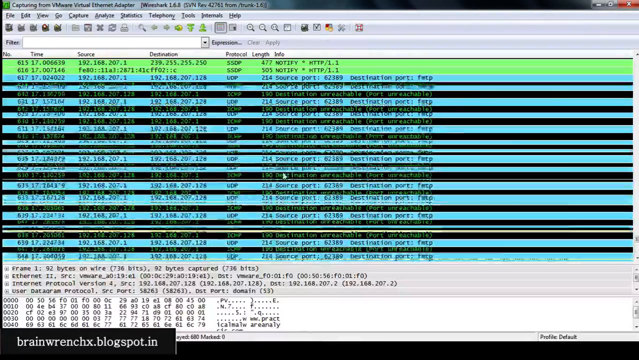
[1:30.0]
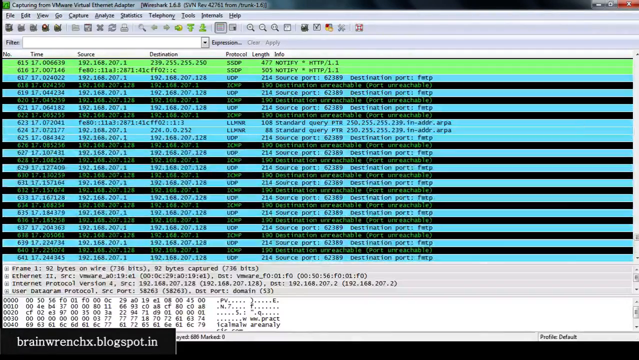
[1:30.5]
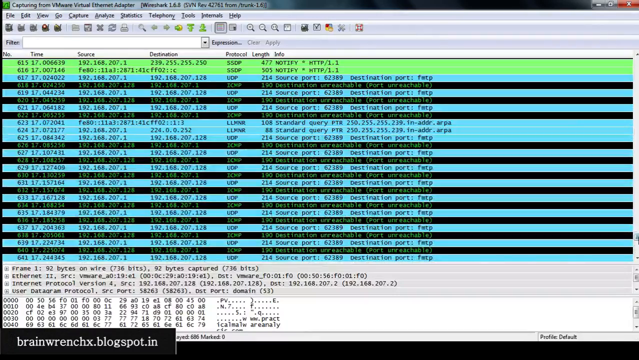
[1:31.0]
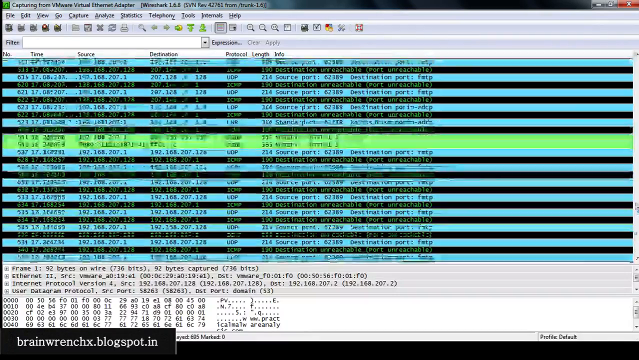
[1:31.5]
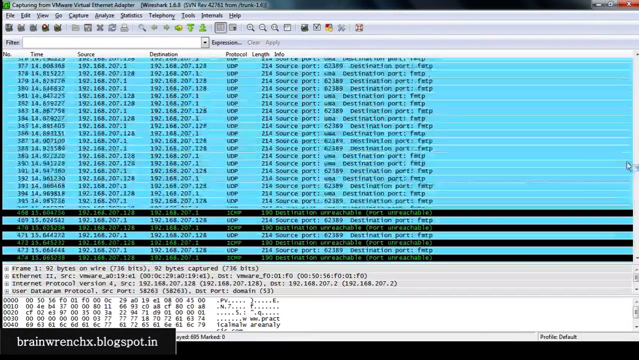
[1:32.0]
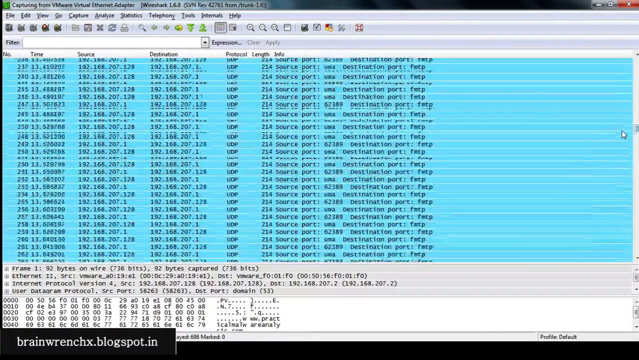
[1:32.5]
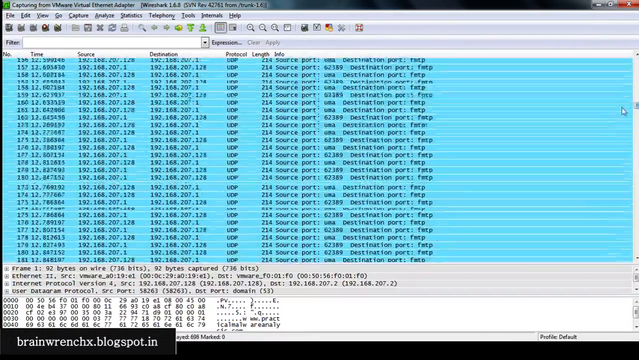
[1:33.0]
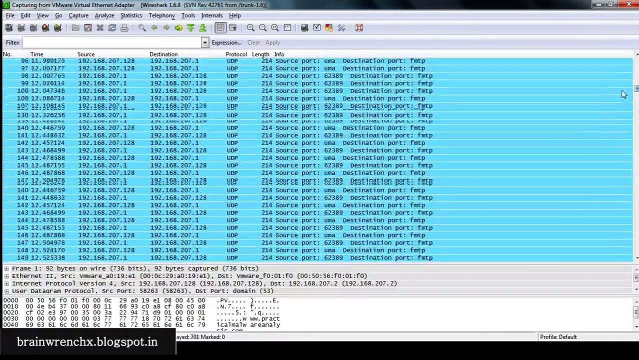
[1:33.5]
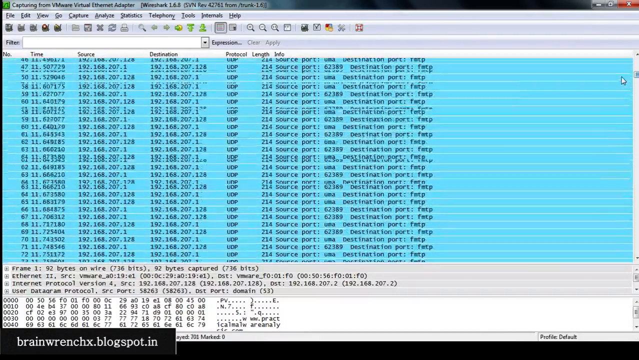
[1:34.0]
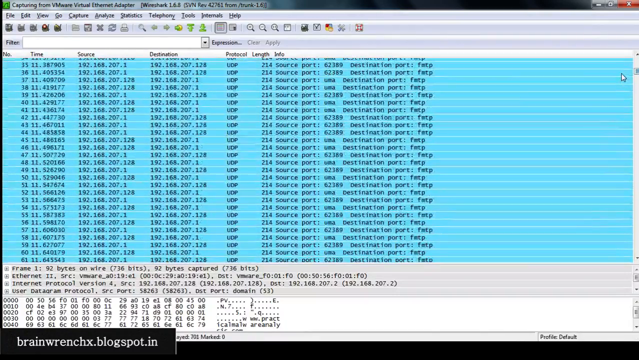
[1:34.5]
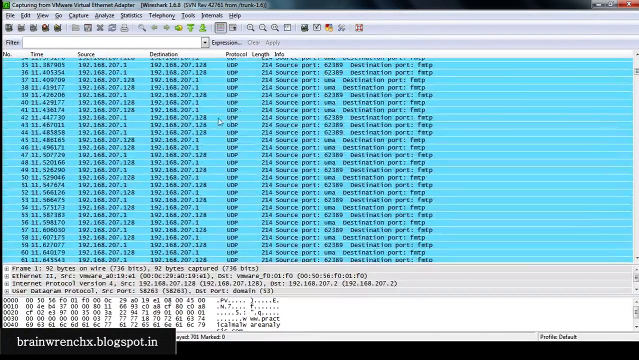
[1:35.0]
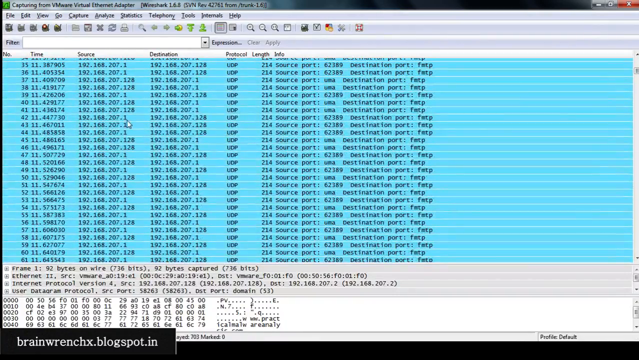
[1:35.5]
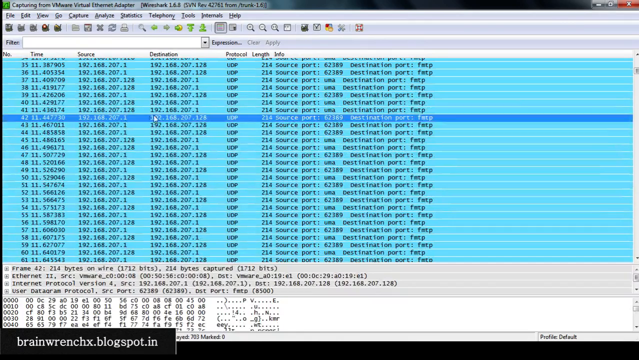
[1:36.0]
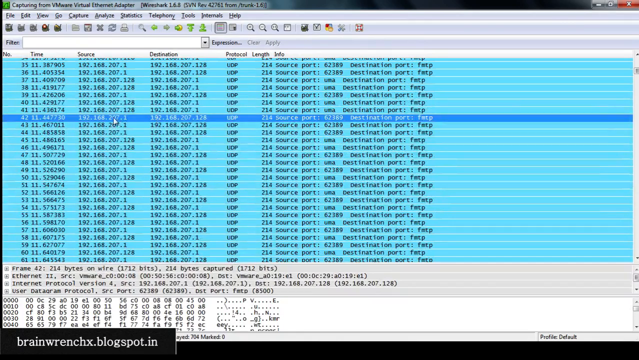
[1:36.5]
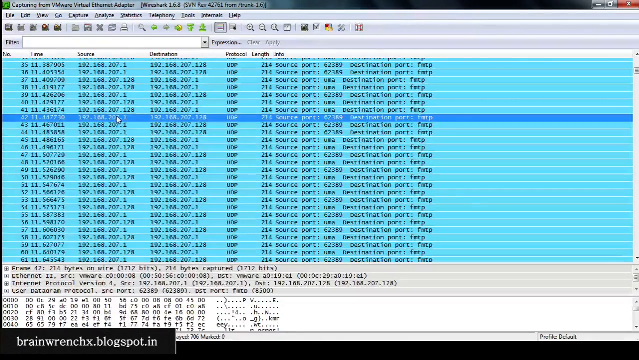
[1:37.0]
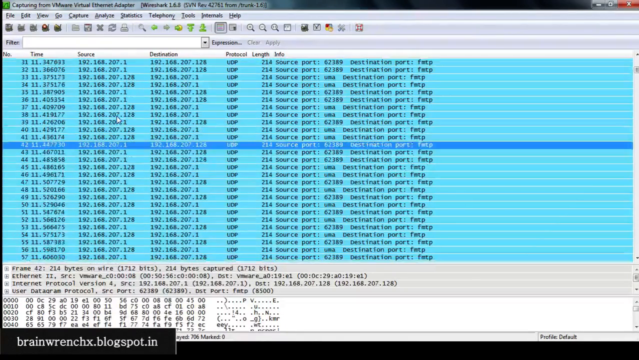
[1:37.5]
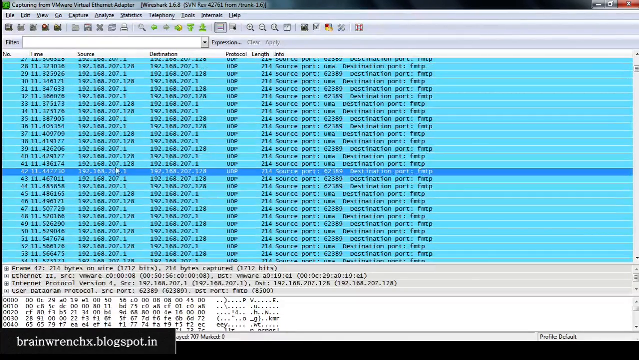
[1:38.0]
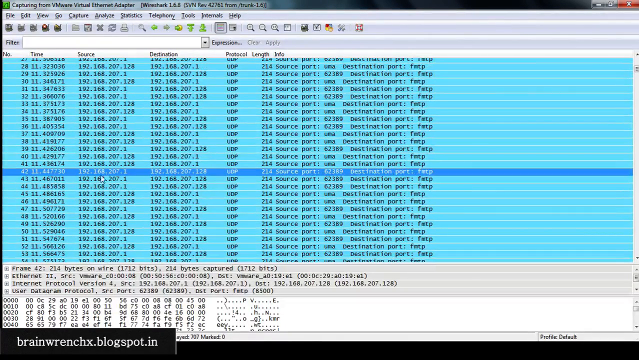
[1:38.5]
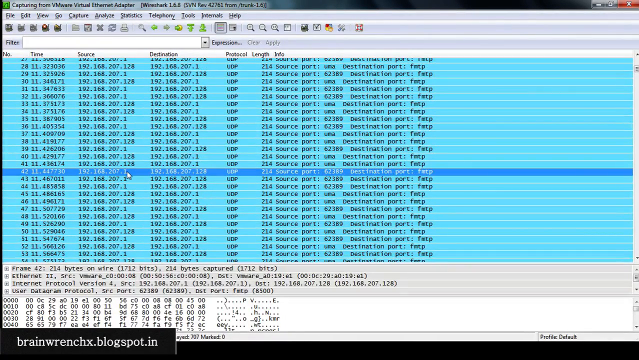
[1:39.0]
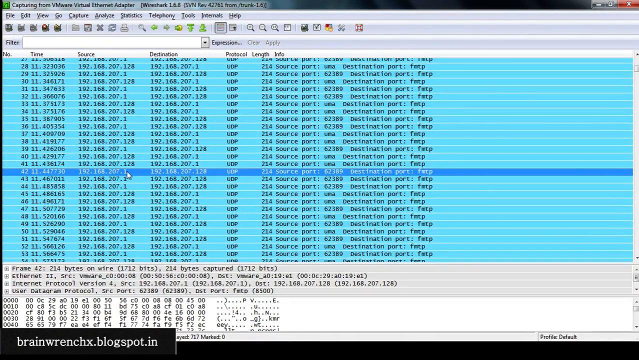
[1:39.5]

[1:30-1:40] A very long list of apparently IP addresses fills the display, color-coded in light blue, lime green and gray. The data seems to relate to the VoIP Caller Extreme application running on an old version of Windows.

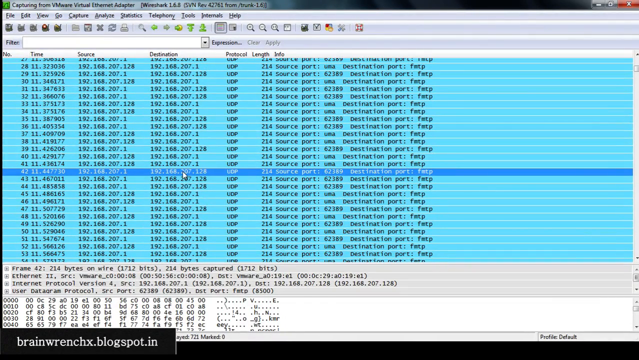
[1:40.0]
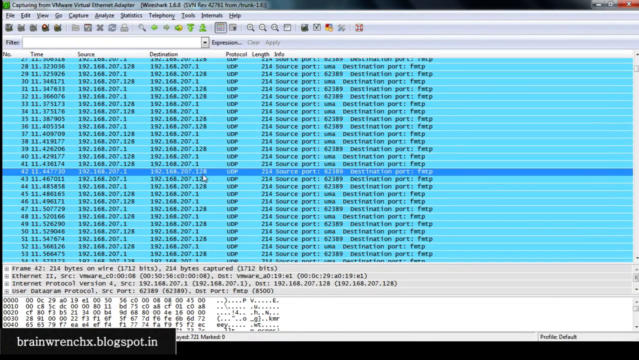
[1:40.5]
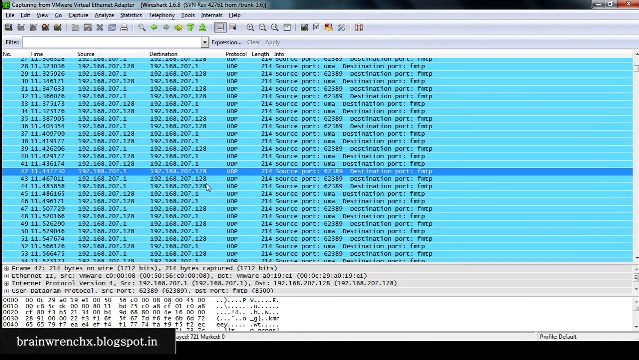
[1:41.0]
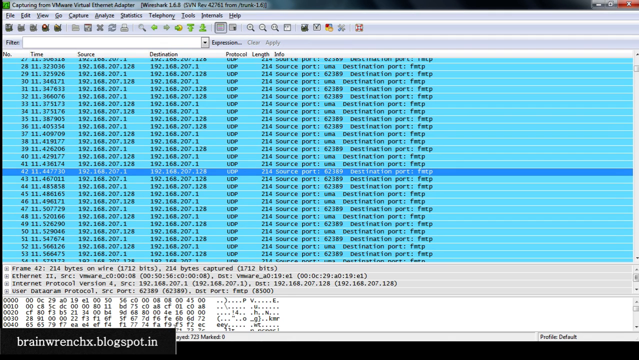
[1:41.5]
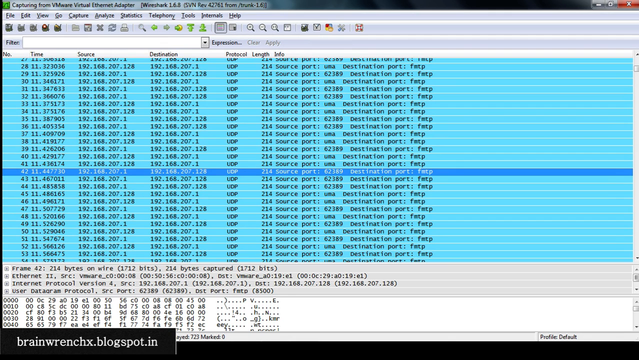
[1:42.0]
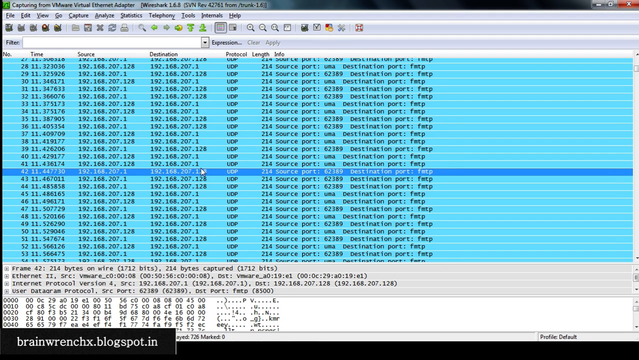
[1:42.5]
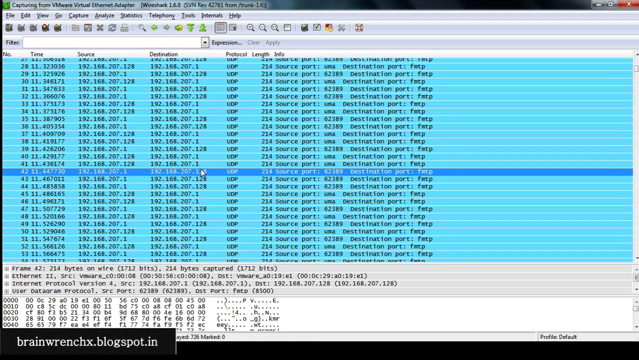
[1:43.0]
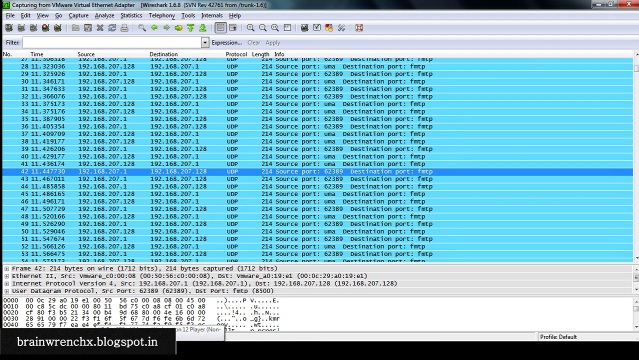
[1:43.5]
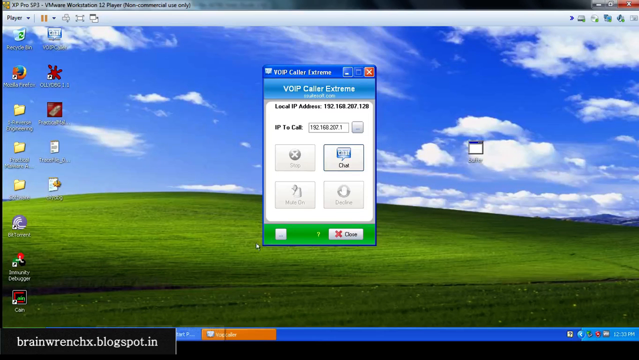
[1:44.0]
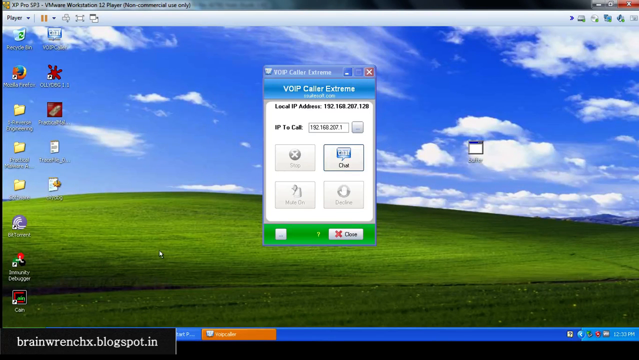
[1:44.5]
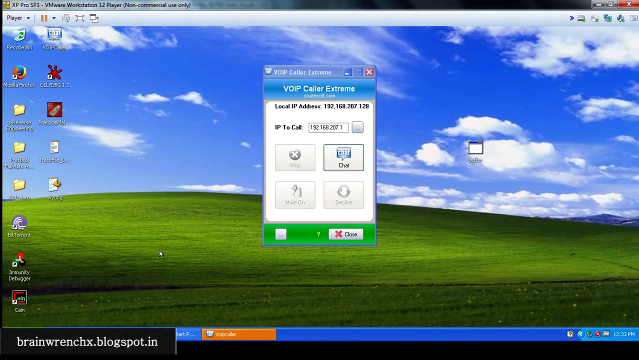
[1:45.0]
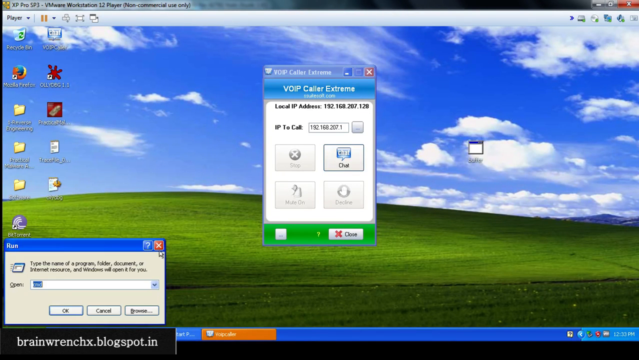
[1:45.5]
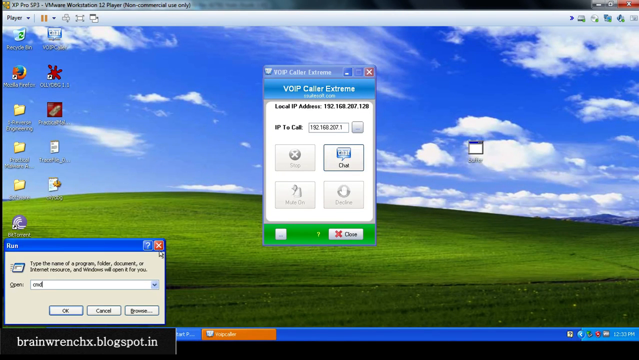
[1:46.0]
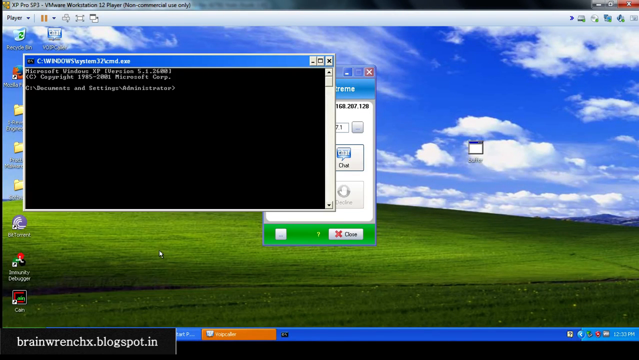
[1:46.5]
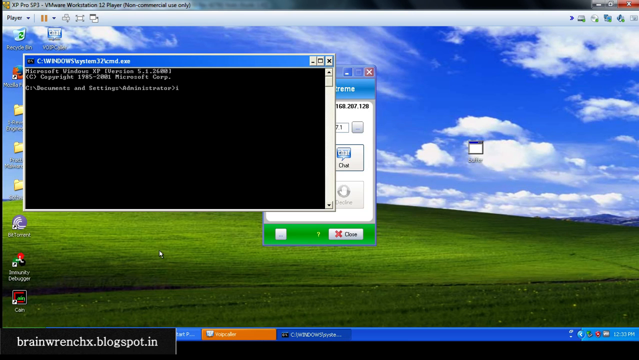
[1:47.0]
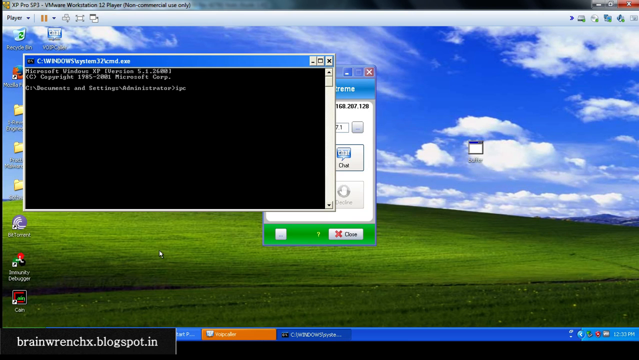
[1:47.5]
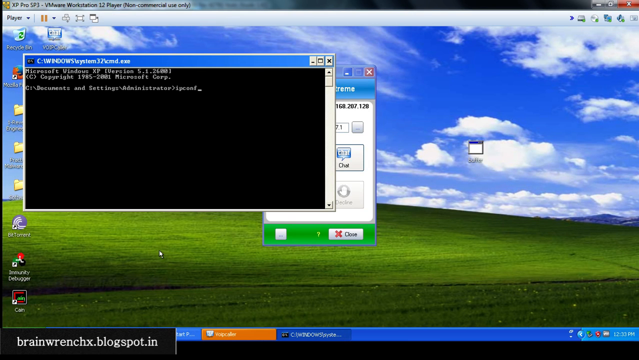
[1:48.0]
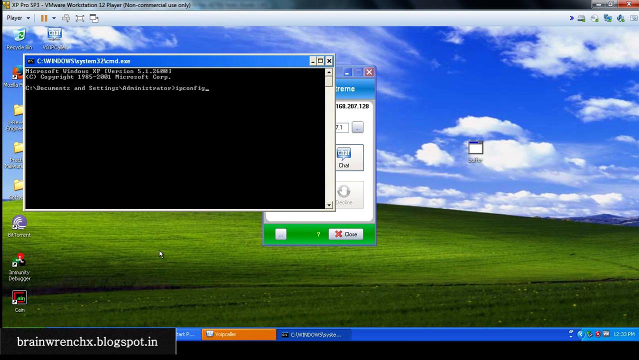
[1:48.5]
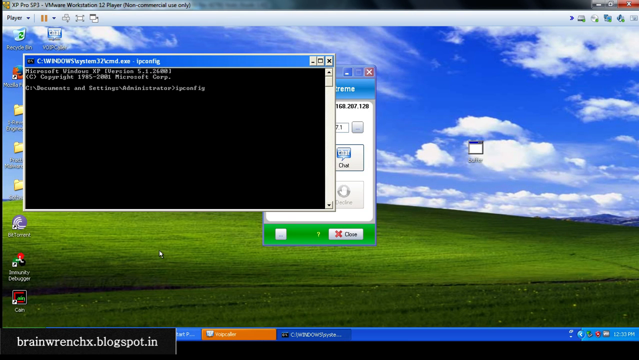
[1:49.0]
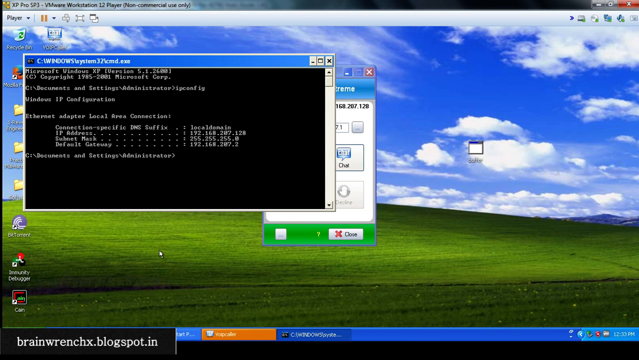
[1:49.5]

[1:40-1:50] The app is on the screen again, along with a Windows command line. The system is Microsoft Windows XP, and the command line goes to ipconfig.